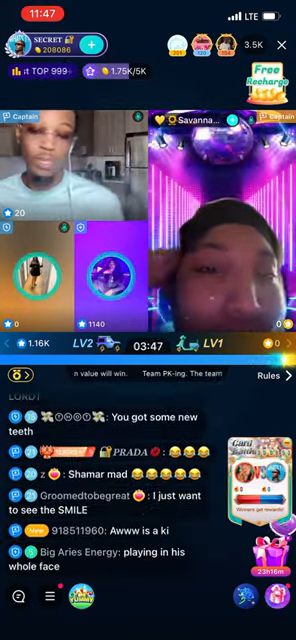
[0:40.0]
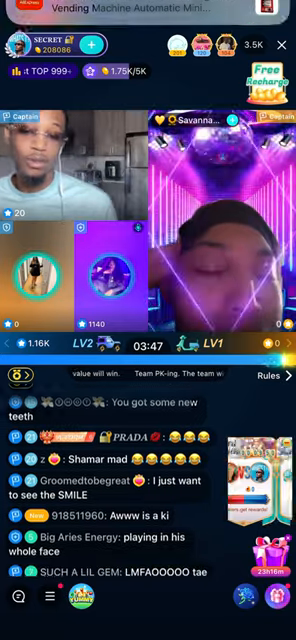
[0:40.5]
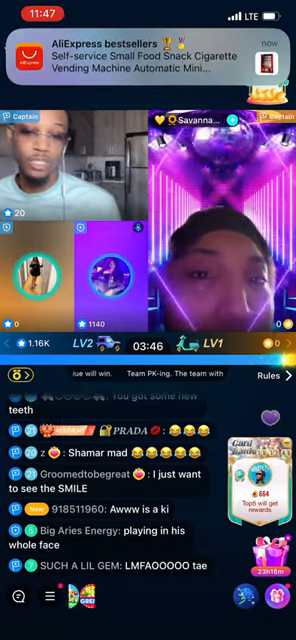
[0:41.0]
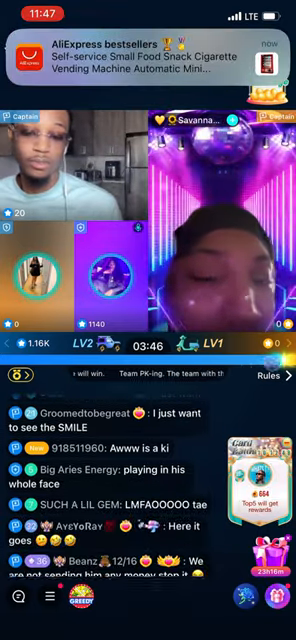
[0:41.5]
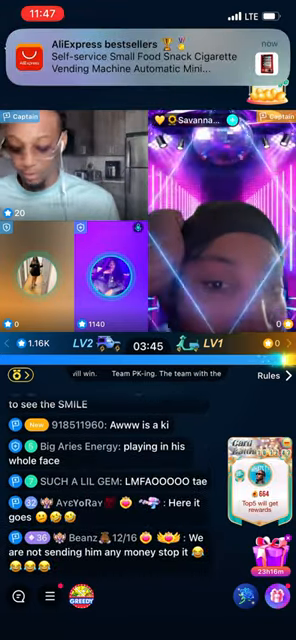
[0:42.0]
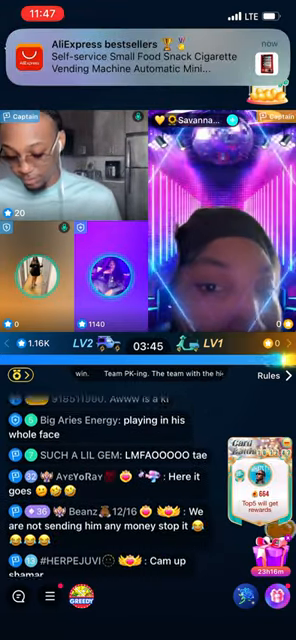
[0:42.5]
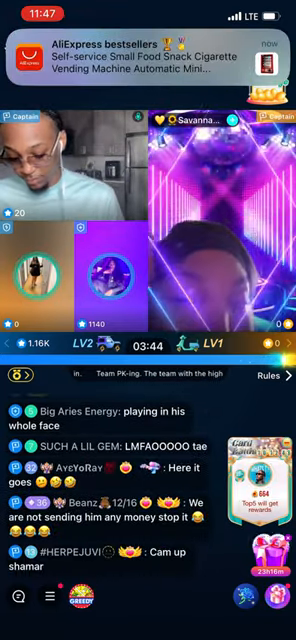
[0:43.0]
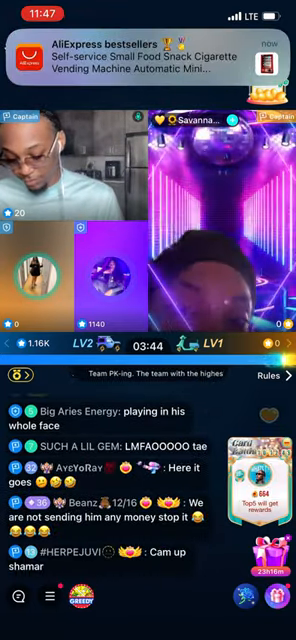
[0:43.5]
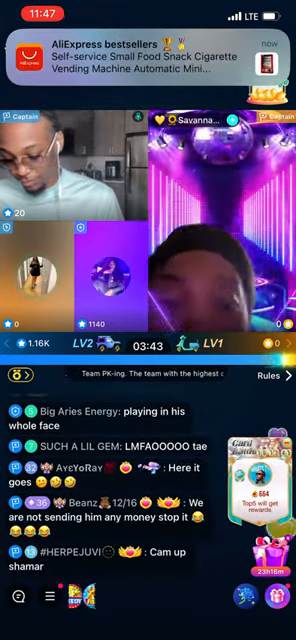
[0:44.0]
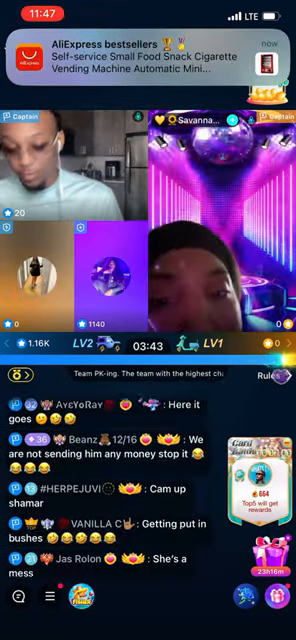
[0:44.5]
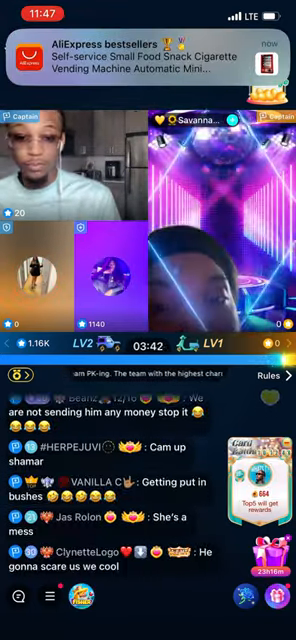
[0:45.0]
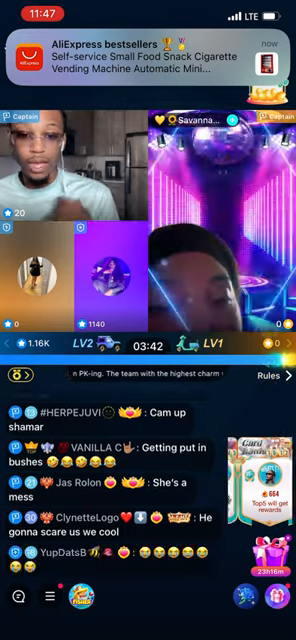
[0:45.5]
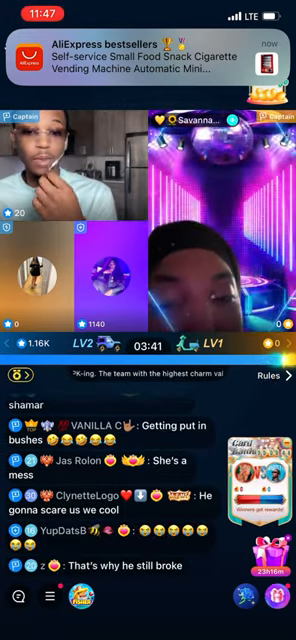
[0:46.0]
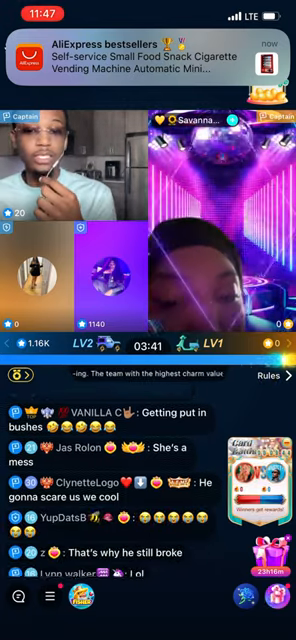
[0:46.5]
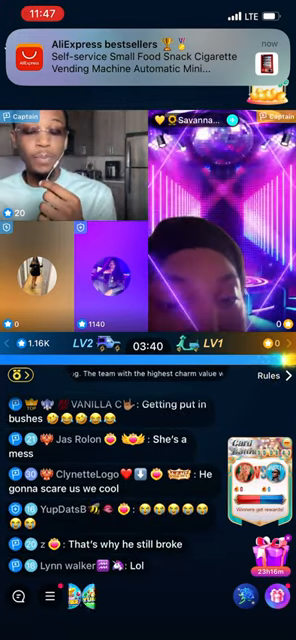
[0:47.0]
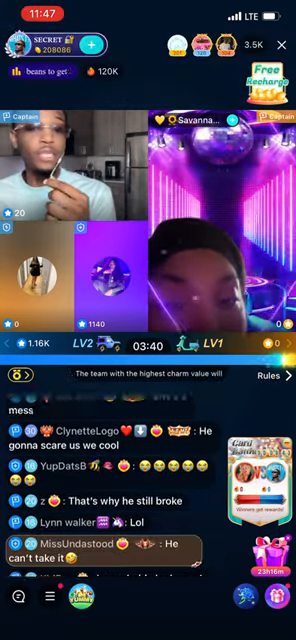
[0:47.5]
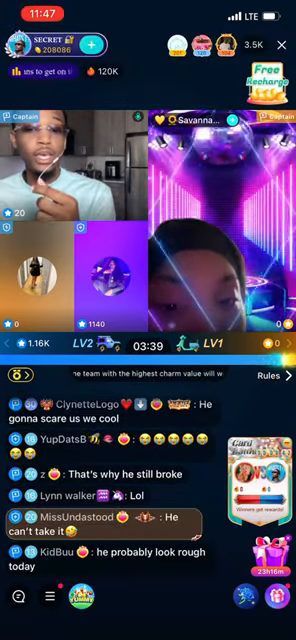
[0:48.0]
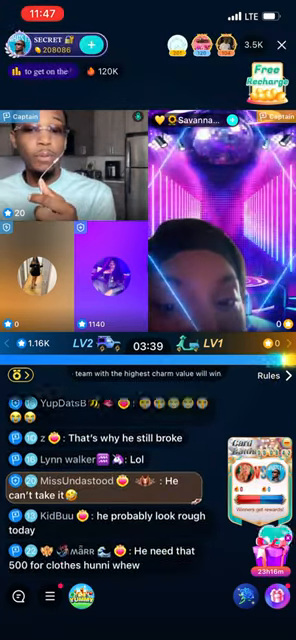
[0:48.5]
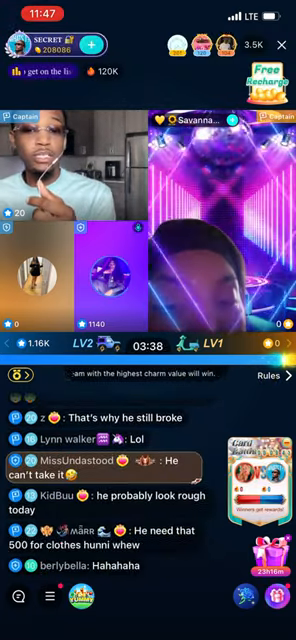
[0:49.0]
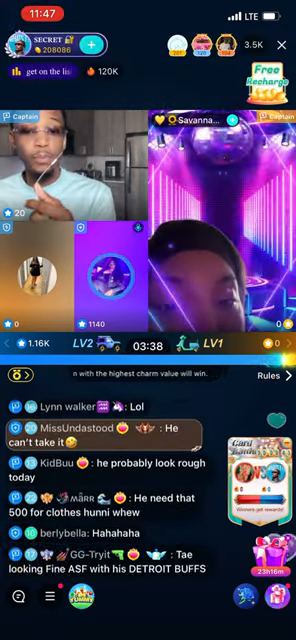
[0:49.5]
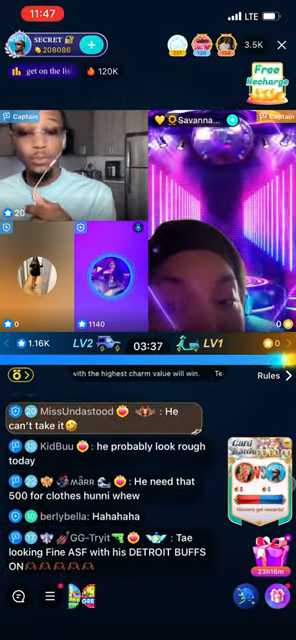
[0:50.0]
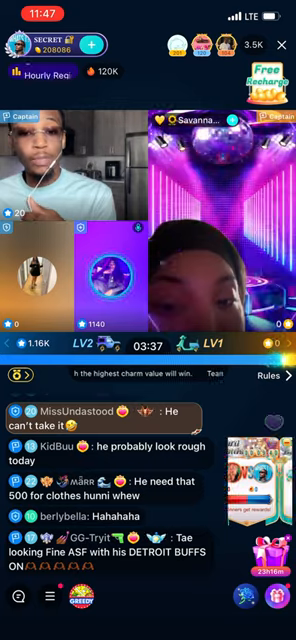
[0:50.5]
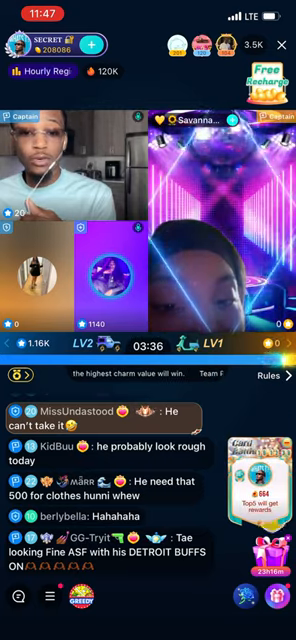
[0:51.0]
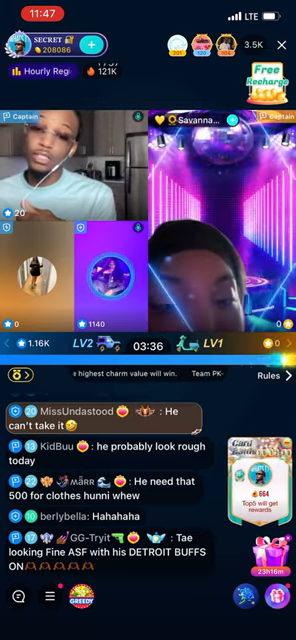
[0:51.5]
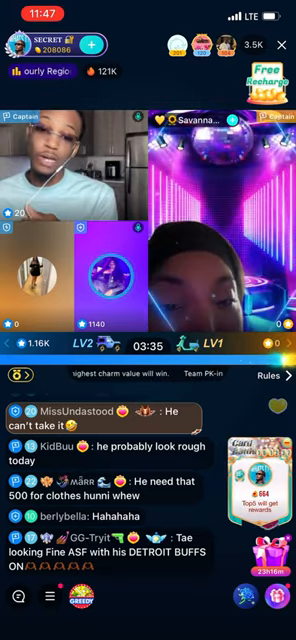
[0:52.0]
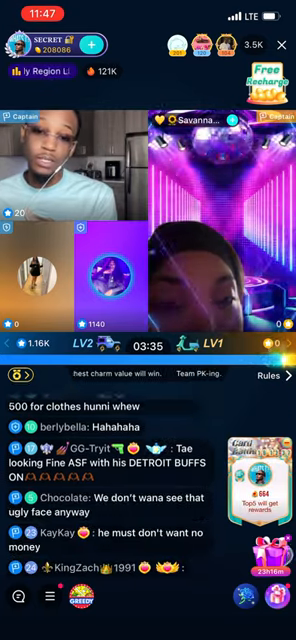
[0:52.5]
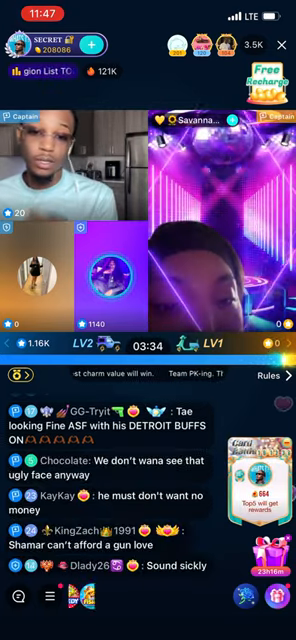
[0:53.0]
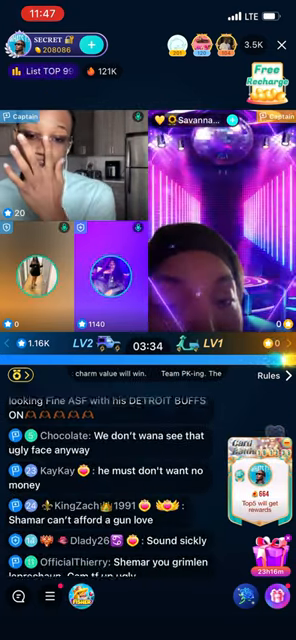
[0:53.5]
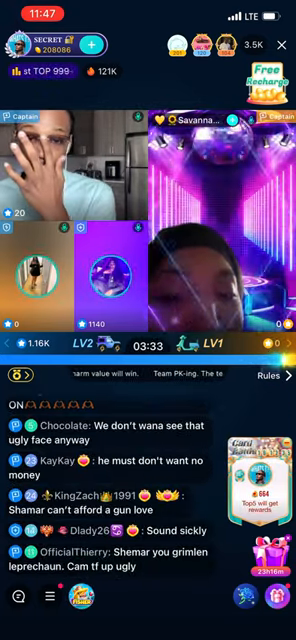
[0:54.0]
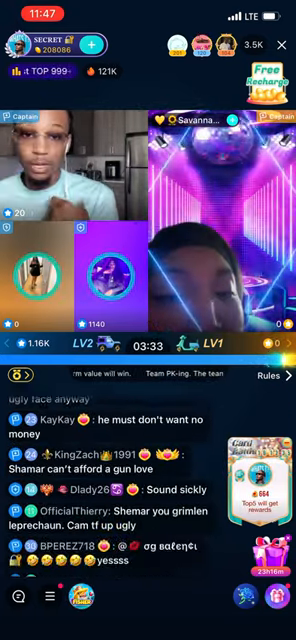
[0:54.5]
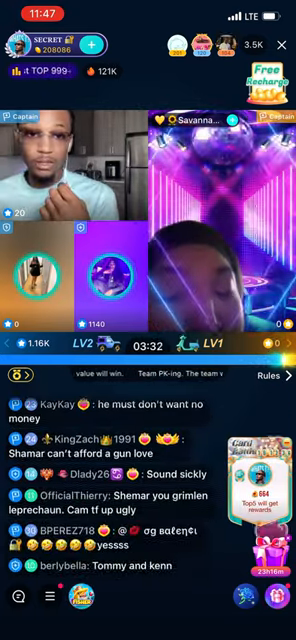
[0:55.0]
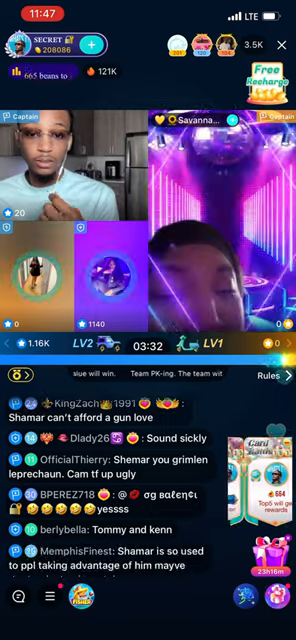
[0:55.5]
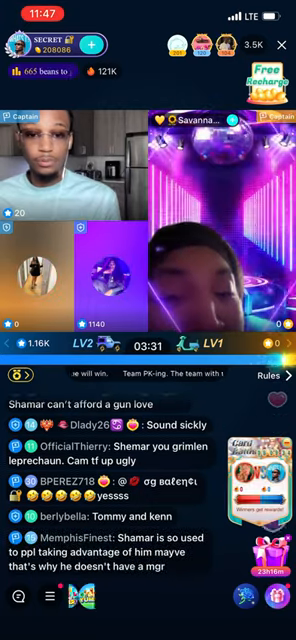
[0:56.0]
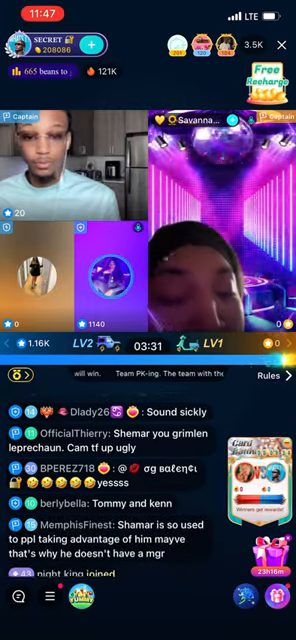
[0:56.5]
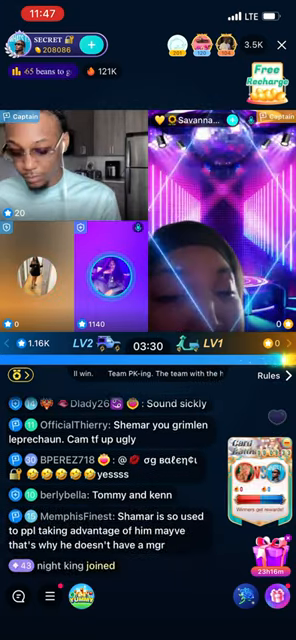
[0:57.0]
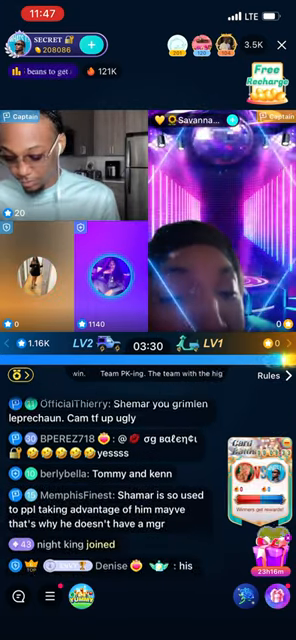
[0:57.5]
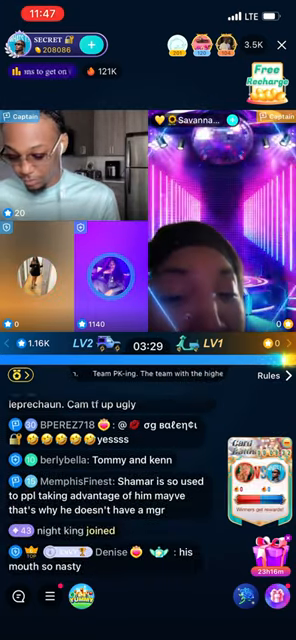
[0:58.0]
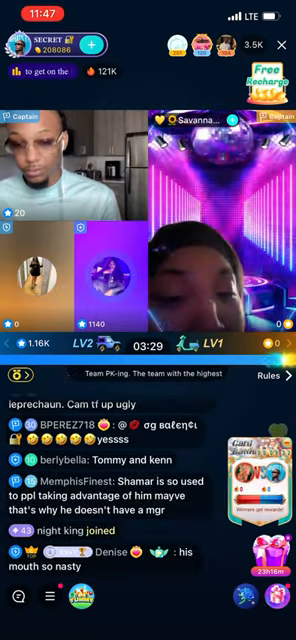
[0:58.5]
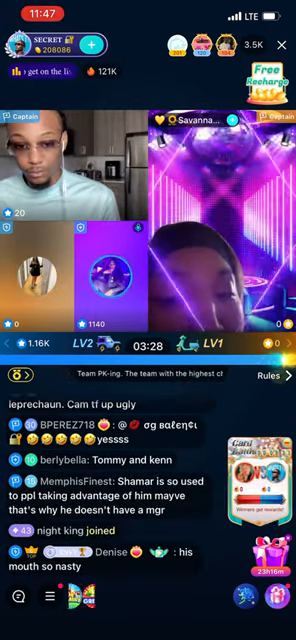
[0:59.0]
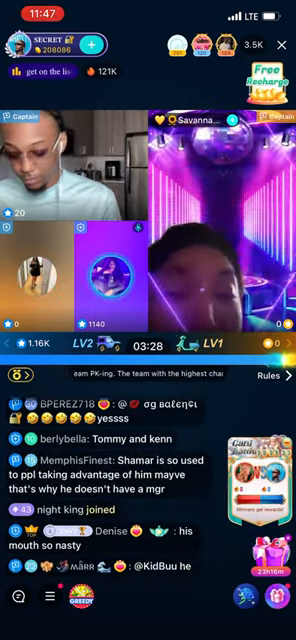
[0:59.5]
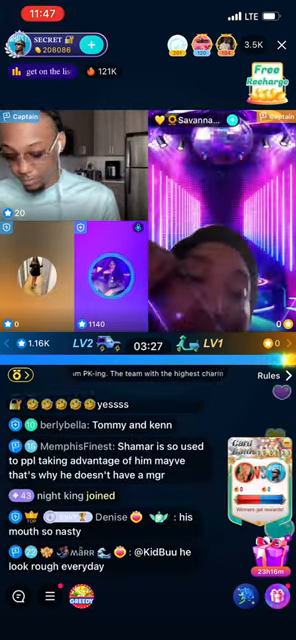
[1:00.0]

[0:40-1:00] The two streamers continue talking to each other in the application while people in the comments react, writing things like "here it goes" and "we are not sending him any money. Stop it." A notification drops down over the top of the application reading "AliExpress Best Sellers Self Service Small Food Snack Cigarette Vending Machine Automatic Mini", with one icon on the left and one on the right and the time "now"; after a couple of seconds it disappears off the top of the screen. As they speak, the timer in the middle of the screen counts down from 3:47 to 3:27. A gift icon in the bottom right bubbles and animates, with hearts rising to the top of the screen, and both people's logos appear with a versus sign in the centre.